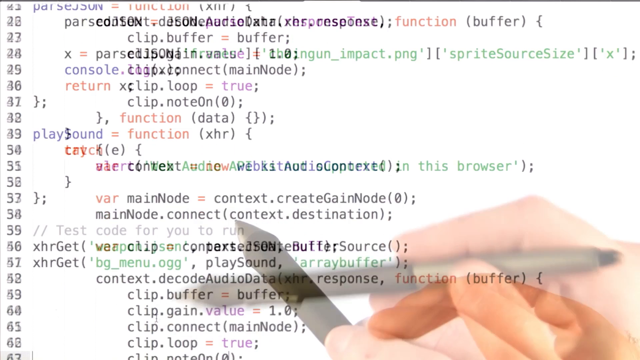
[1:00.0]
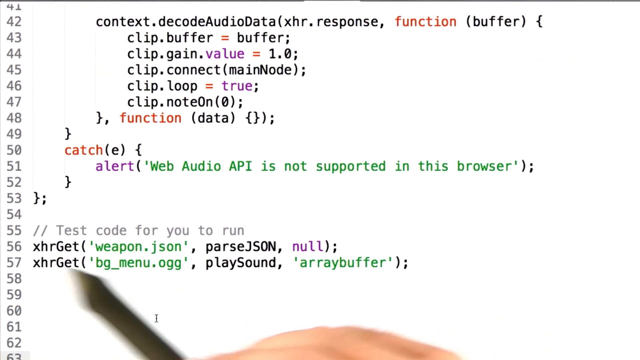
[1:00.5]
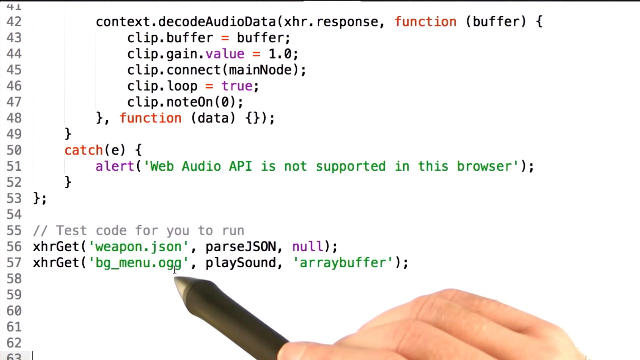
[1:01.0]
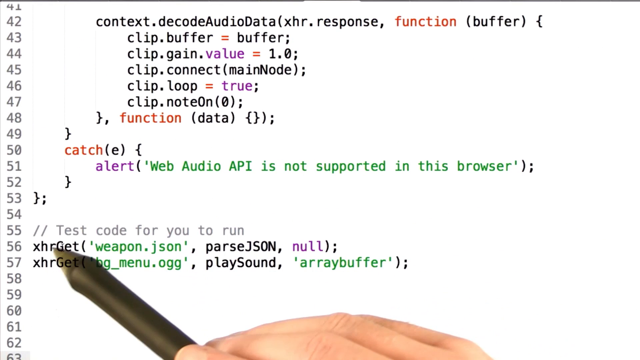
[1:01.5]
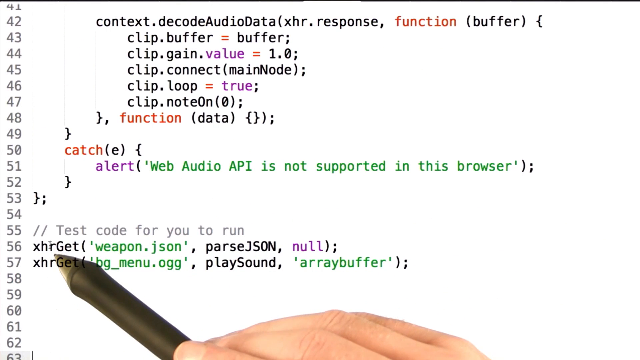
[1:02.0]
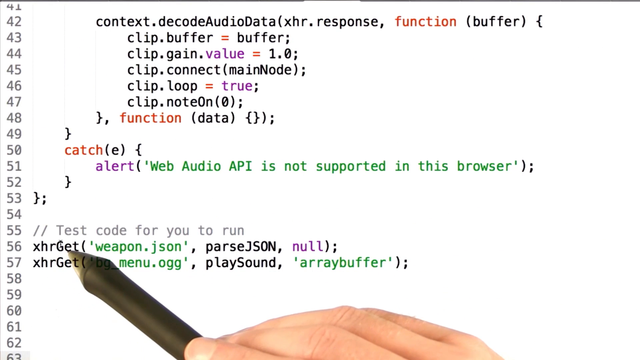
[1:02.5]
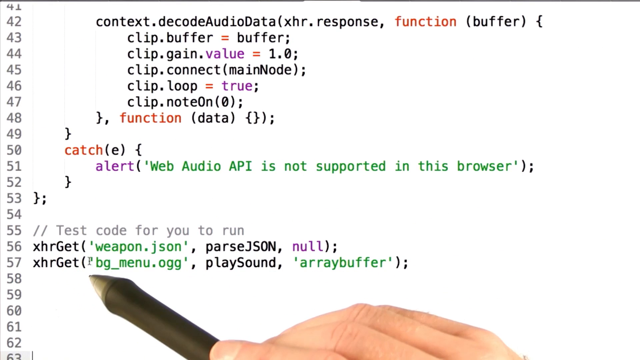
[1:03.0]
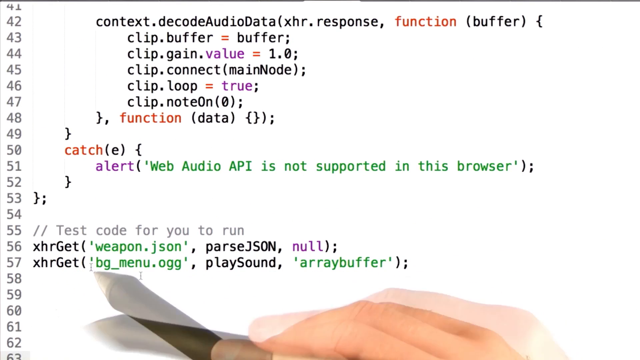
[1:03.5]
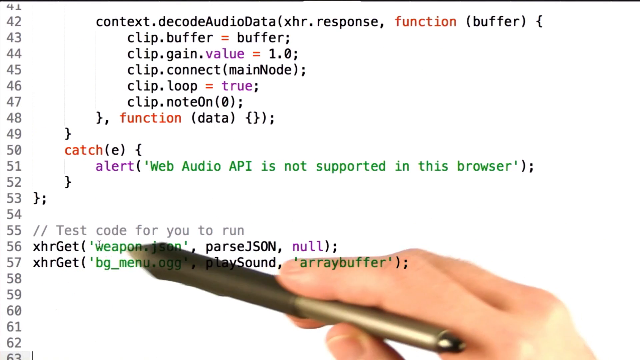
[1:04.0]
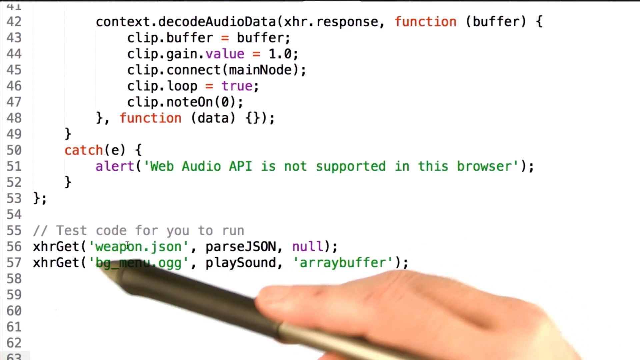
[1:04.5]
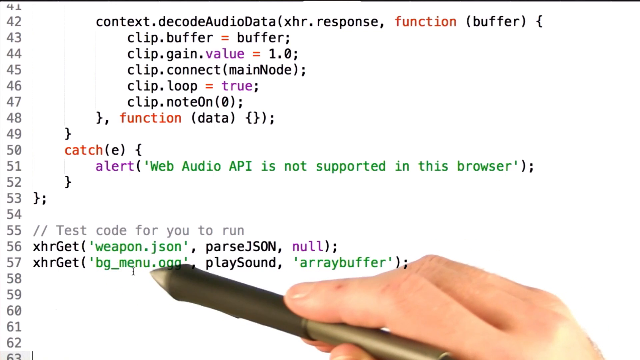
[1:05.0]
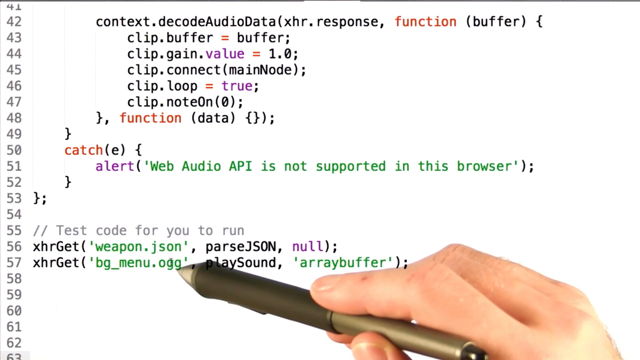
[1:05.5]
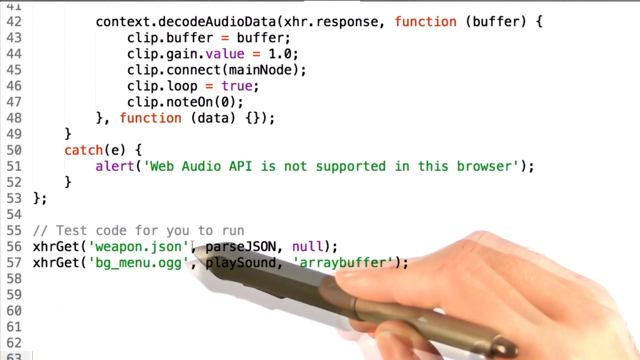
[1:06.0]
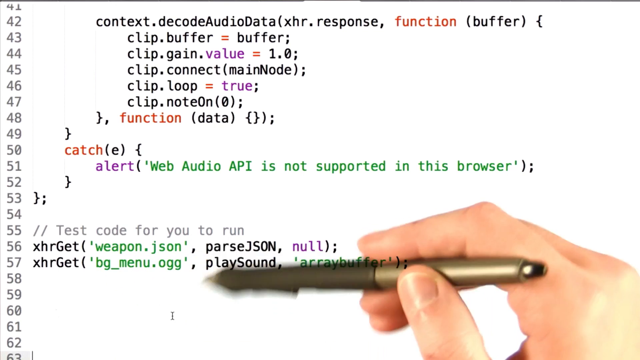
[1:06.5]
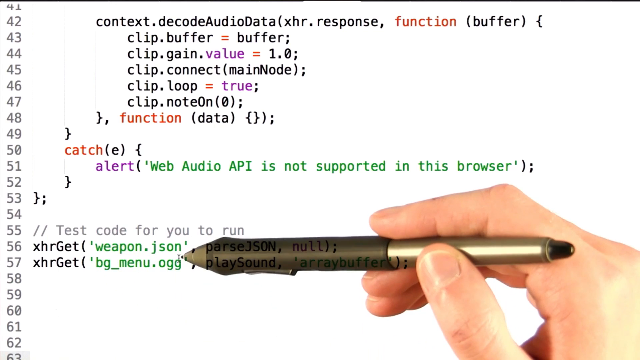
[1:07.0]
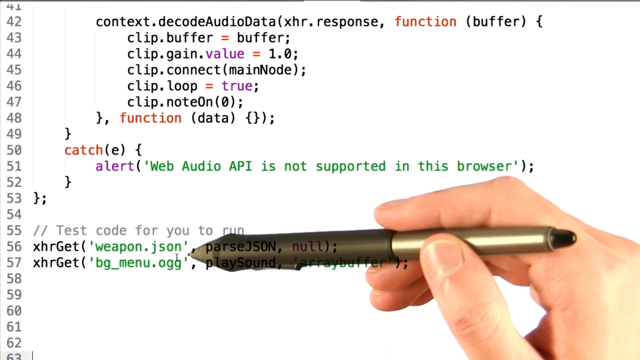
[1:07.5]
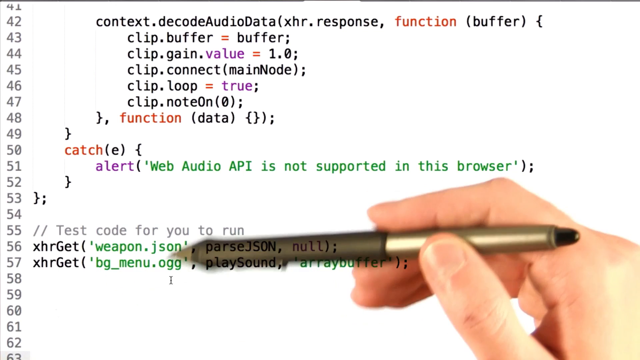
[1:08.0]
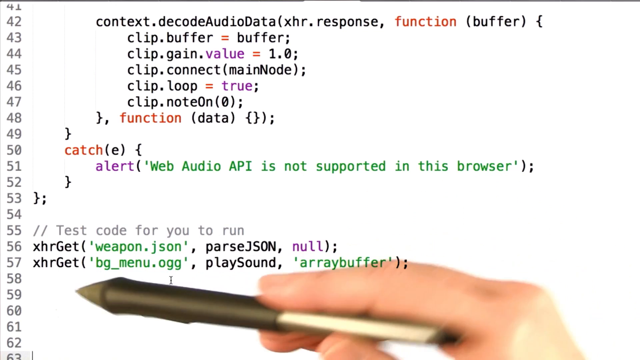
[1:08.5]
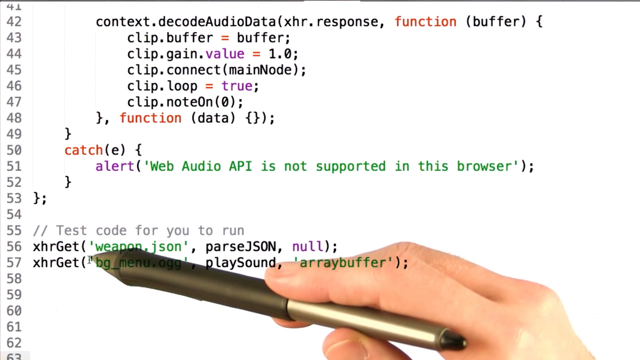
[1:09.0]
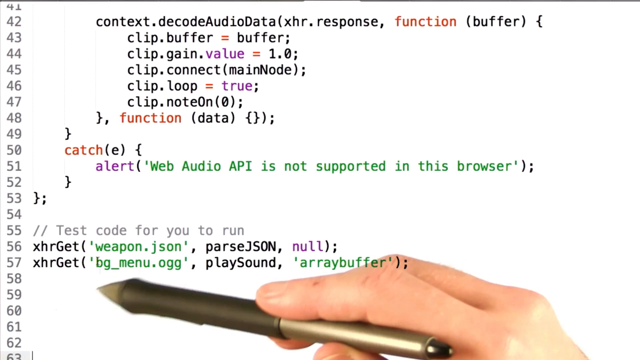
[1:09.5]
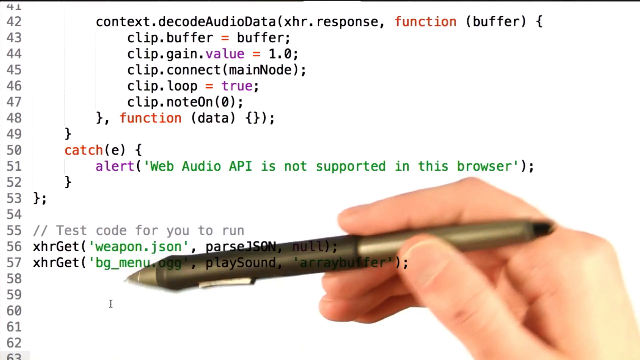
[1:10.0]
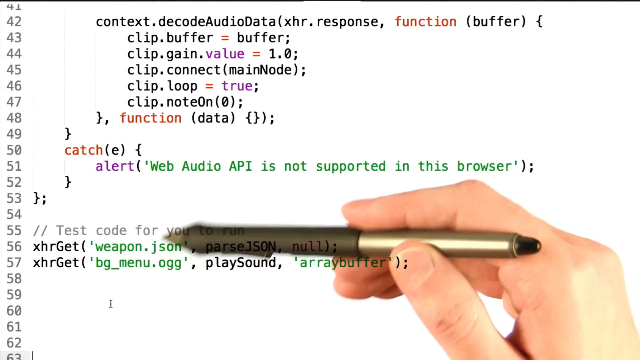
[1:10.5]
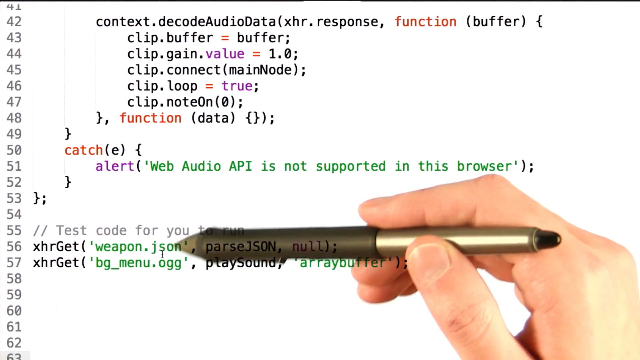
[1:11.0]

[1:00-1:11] A blank white background shows the numbers 41 through 63 on the left-hand side. Beside each number is either code in black, green, orange, or purple text, a blank line, or a small amount of gray text preceded by two slashes. A person's hand and pen are visible behind the code. The pen points to various parts of the code and at times moves in a circular motion, as if highlighting or pointing out various parts of the code.